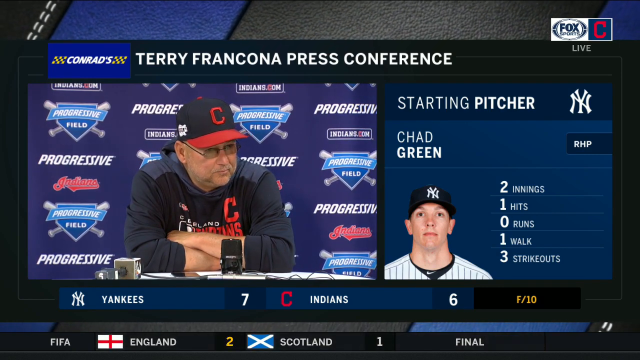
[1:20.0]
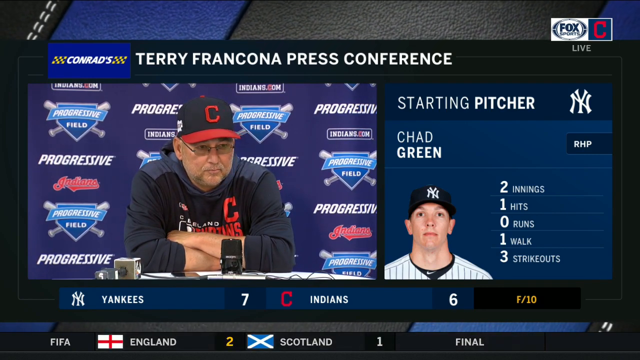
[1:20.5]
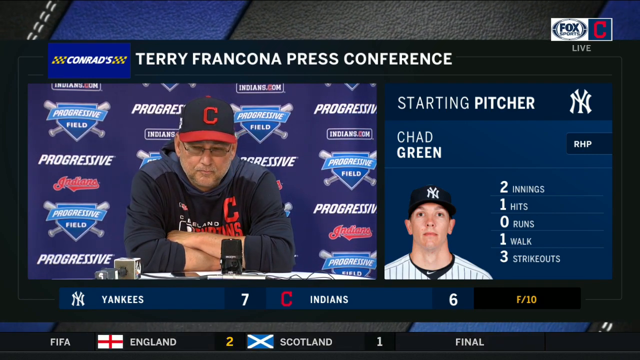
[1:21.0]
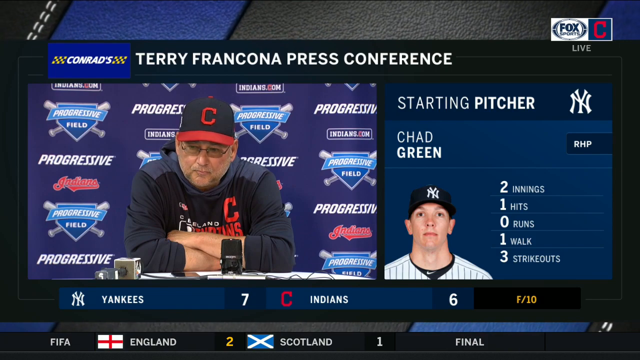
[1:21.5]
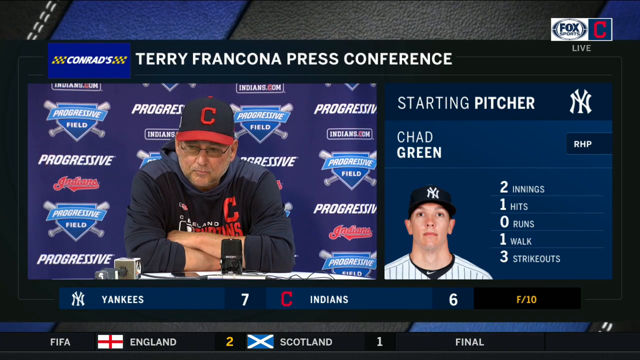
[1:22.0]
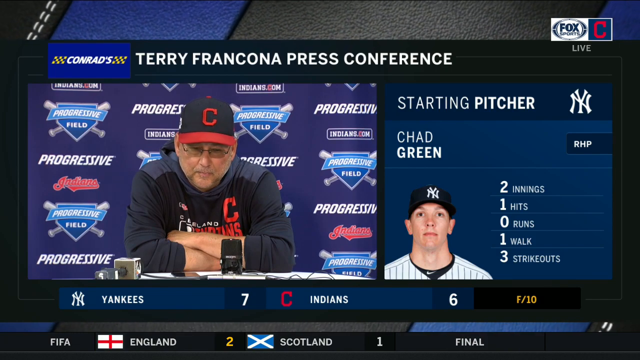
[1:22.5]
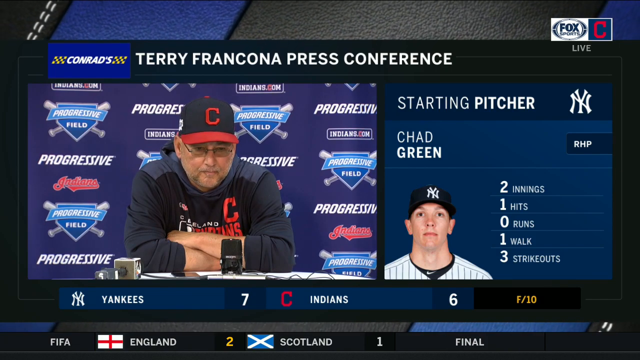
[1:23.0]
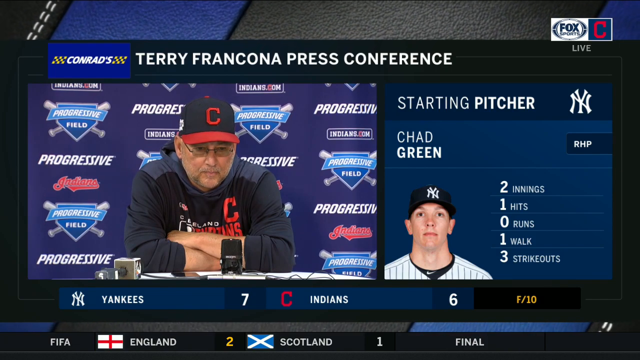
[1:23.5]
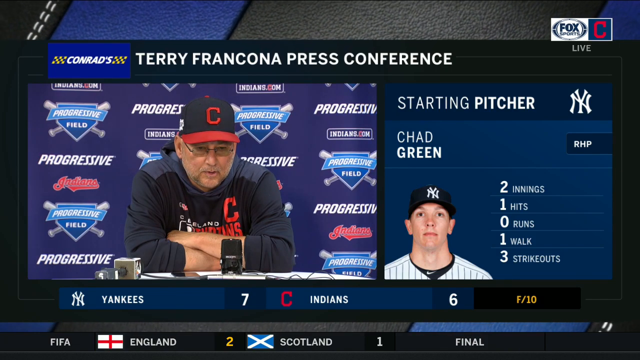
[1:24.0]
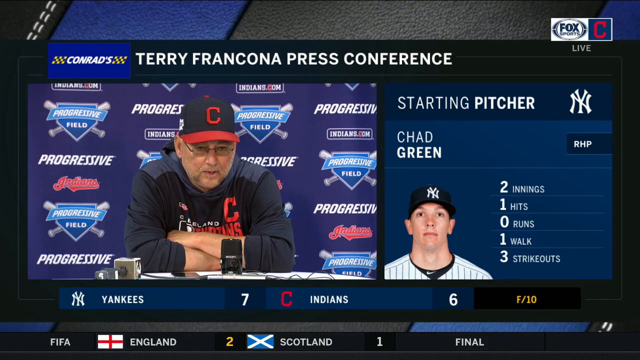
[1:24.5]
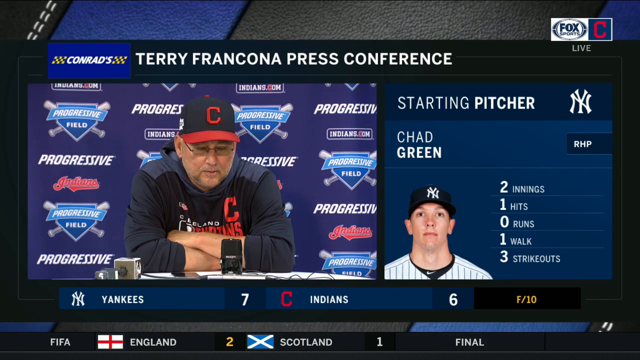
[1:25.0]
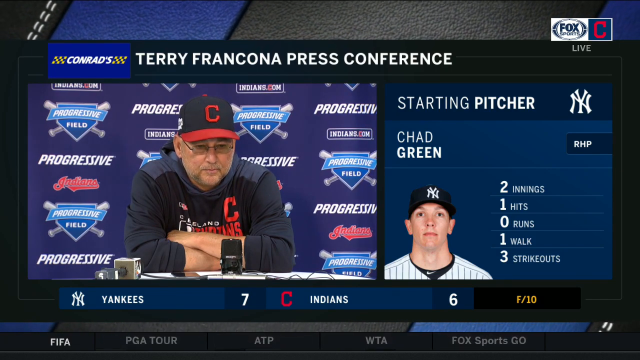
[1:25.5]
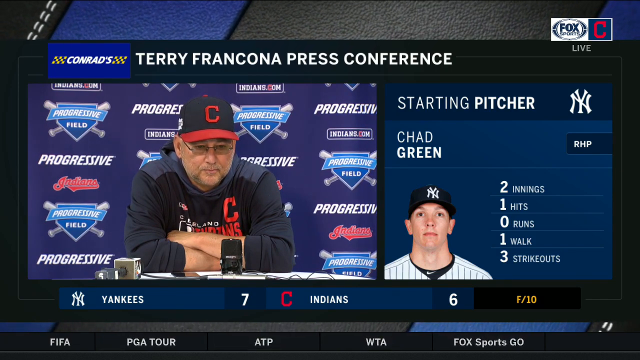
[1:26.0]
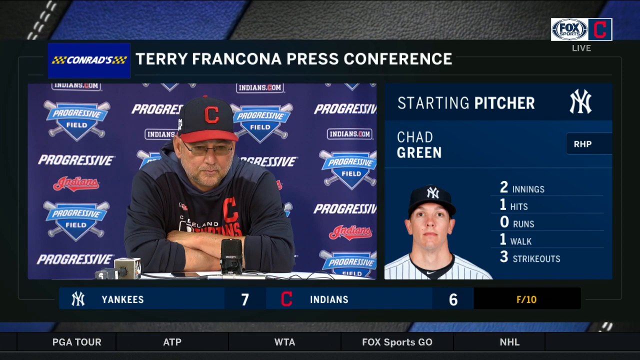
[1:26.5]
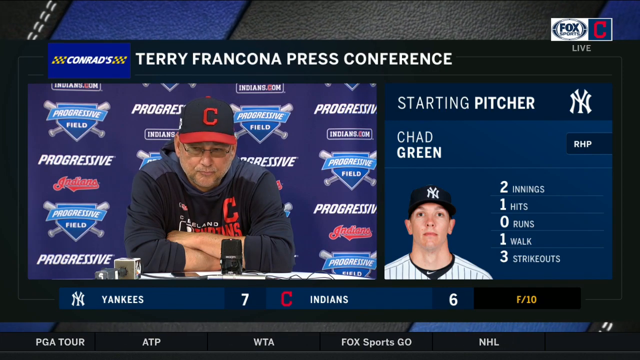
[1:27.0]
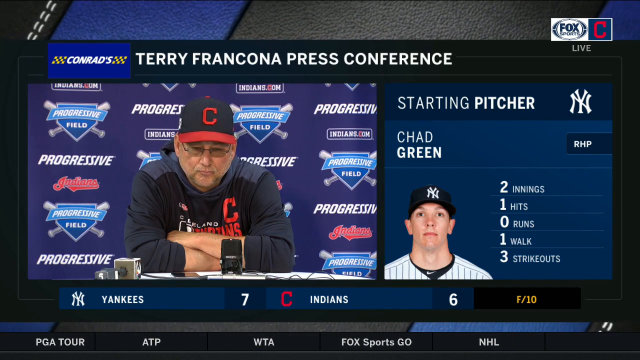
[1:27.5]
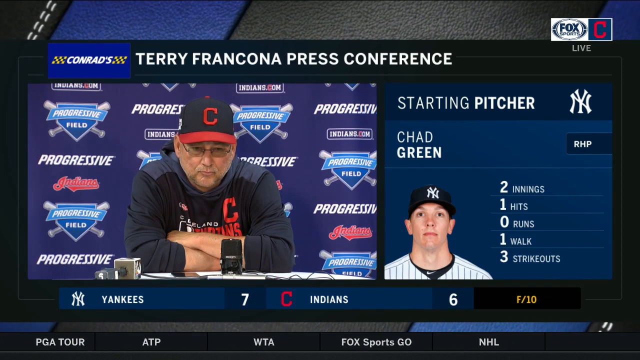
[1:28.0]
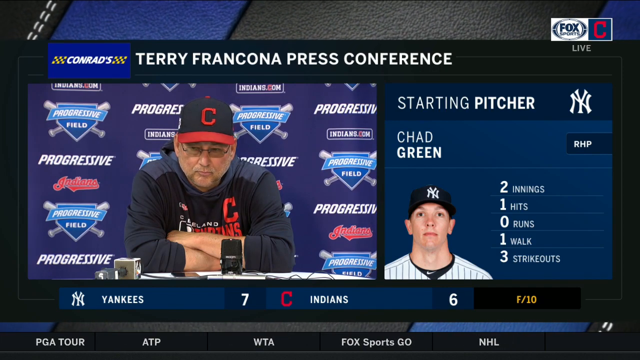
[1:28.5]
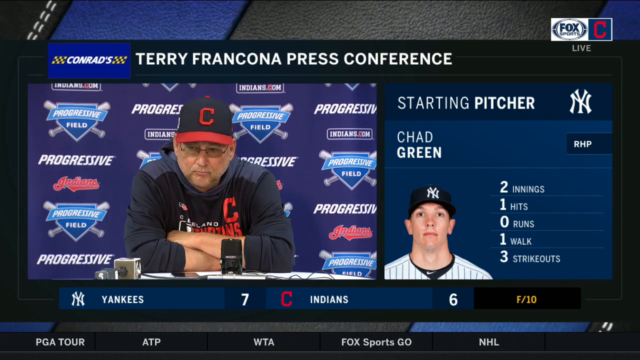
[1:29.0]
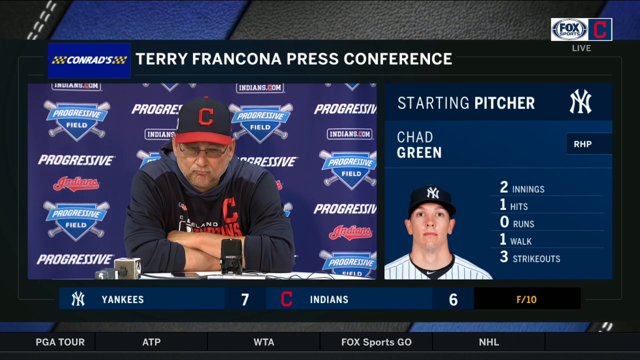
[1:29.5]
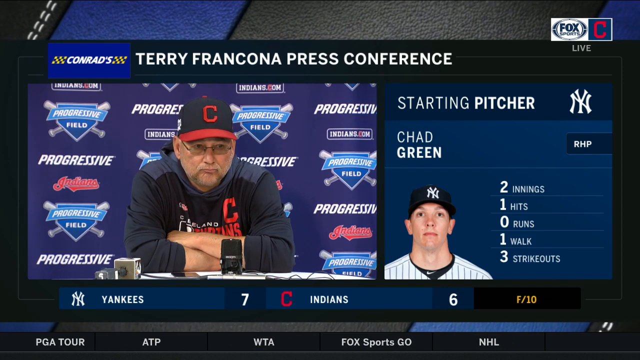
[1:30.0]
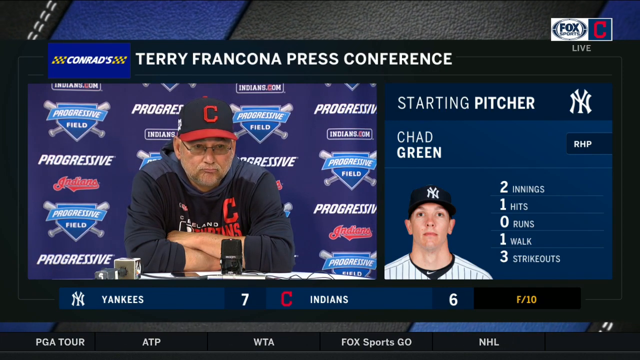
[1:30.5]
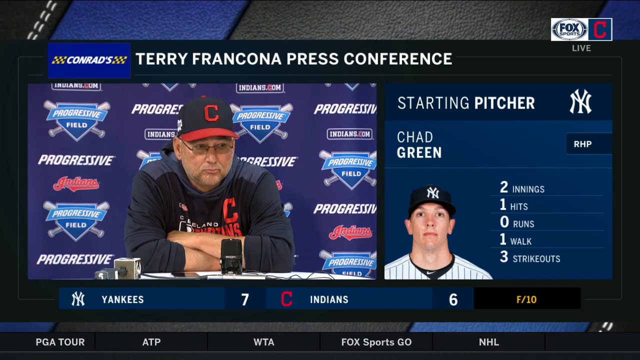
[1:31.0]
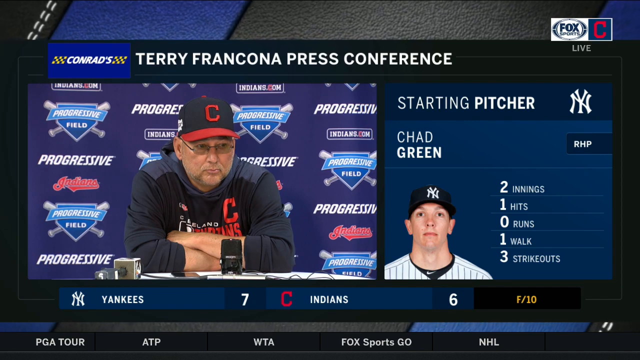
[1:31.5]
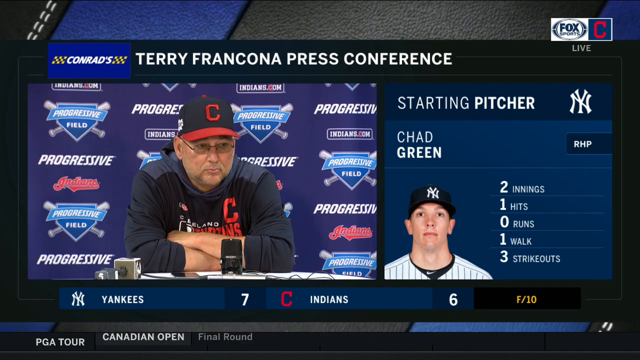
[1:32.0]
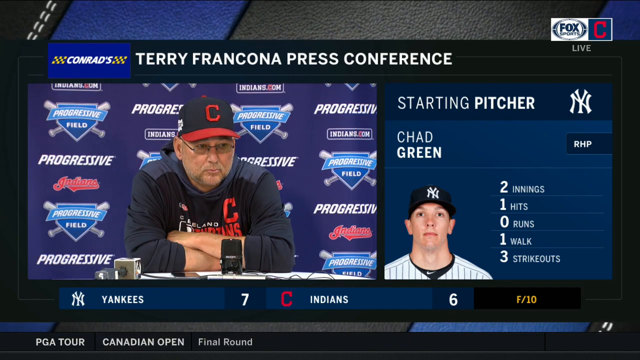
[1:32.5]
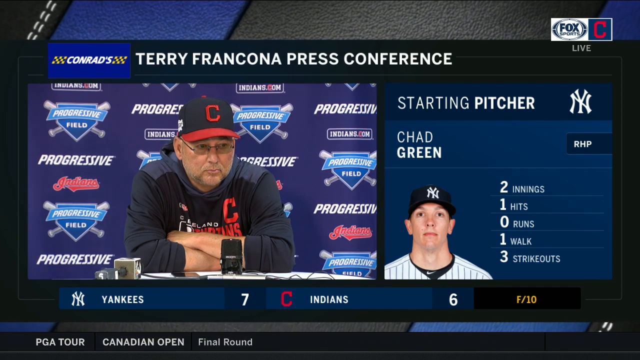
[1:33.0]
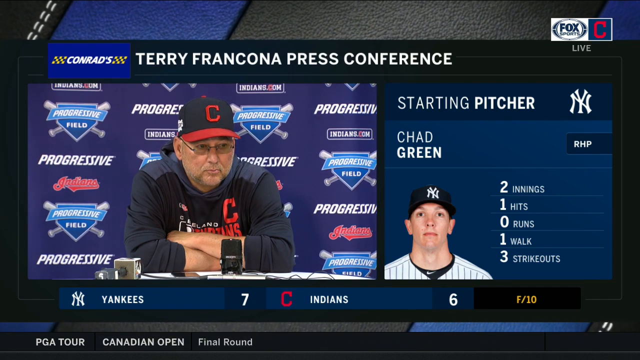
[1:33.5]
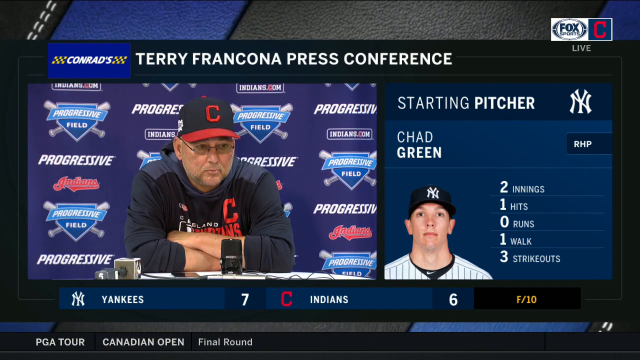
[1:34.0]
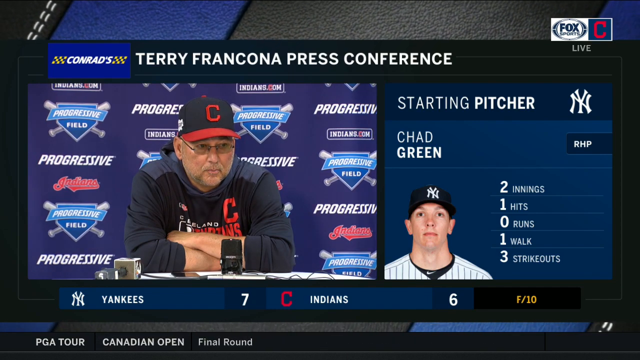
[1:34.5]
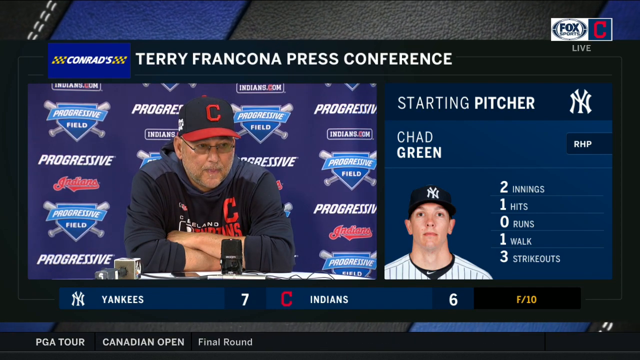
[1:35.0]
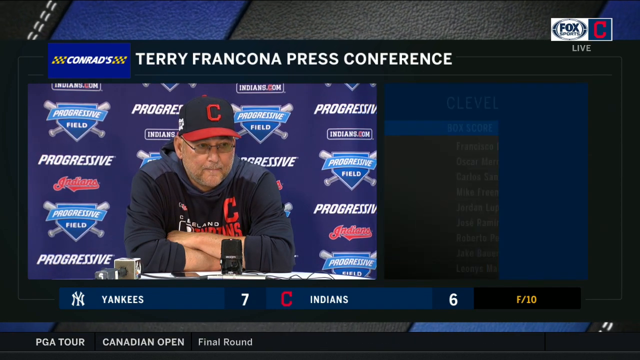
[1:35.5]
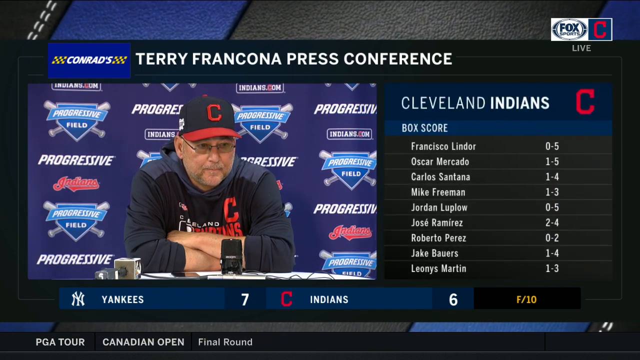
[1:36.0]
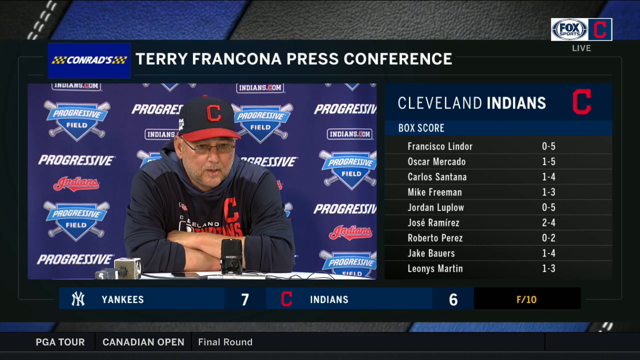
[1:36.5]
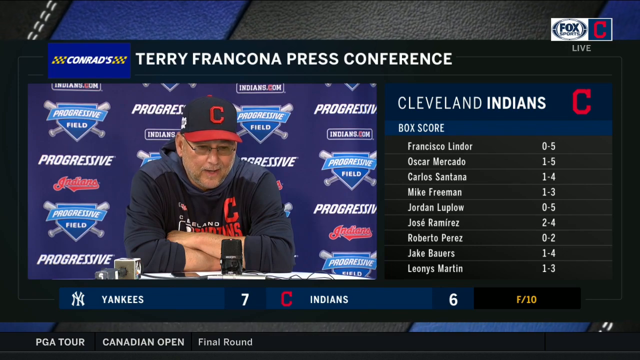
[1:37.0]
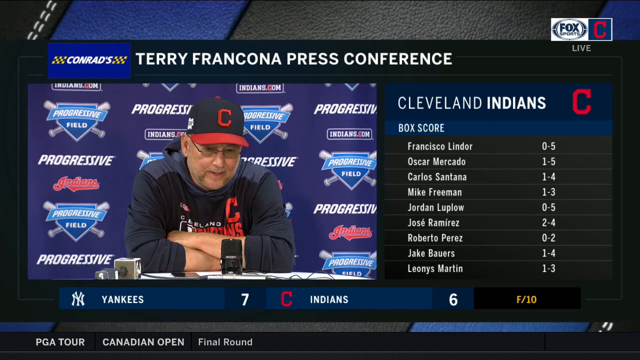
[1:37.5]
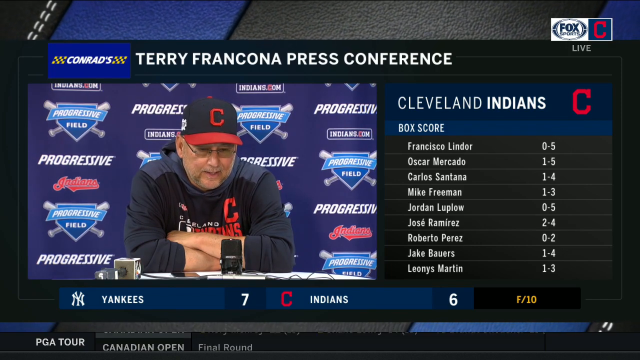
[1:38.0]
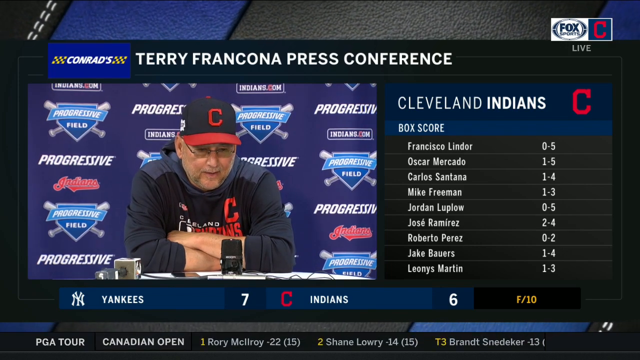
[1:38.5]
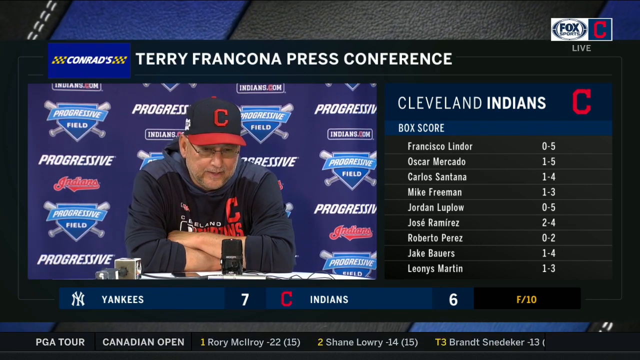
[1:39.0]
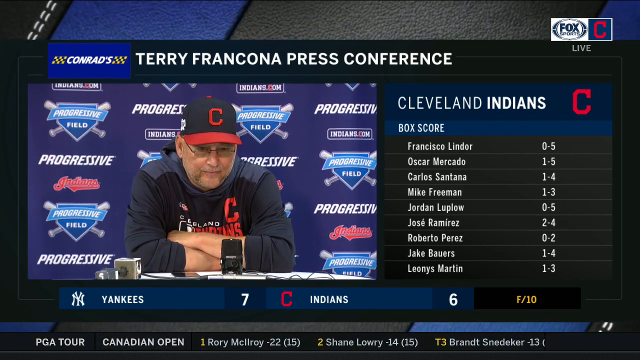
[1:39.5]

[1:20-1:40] Terry Francona, the coach of the Cleveland Indians, is on the left section of the screen. On the right section, starting pitcher Chad Green looks directly into the camera, with his innings, runs, walks and strikeouts displayed. A box score for the Cleveland Indians is shown, along with various baseball players in a separate roster on the right section of the screen. At the top of the screen, a press conference title with the coach's name appears in white capital letters over a black background. The top right reads "Fox Sports, Cleveland Indians", and the scoreboard at the bottom shows the Yankees with 7 versus the Cleveland Indians with 6.